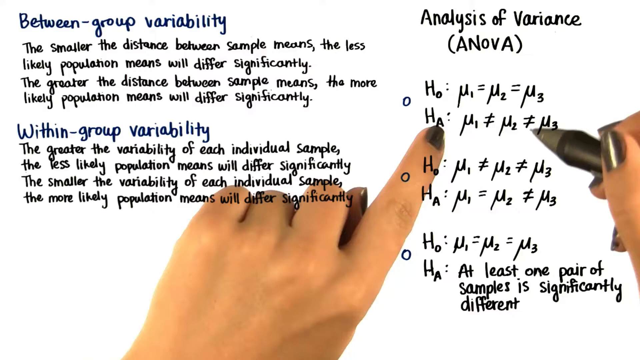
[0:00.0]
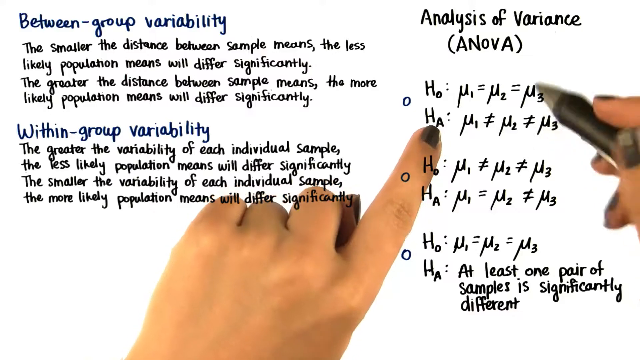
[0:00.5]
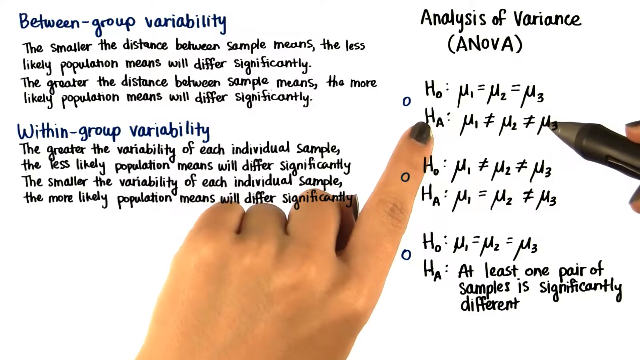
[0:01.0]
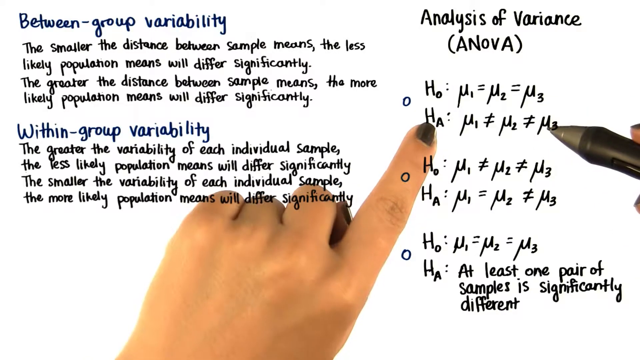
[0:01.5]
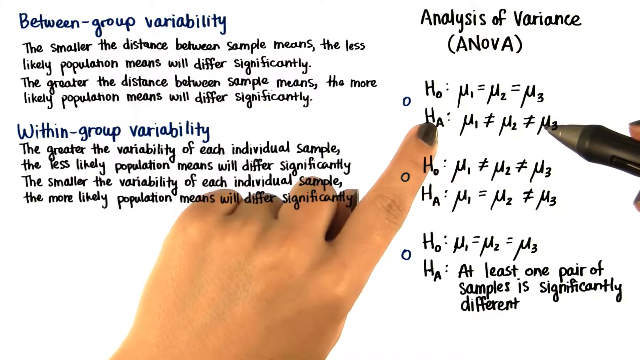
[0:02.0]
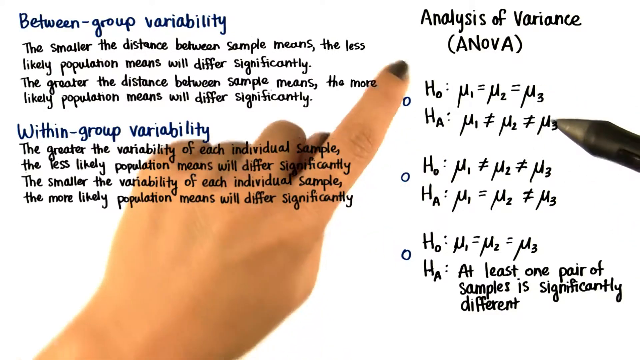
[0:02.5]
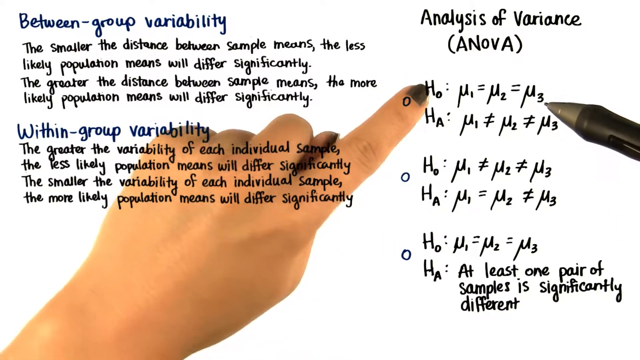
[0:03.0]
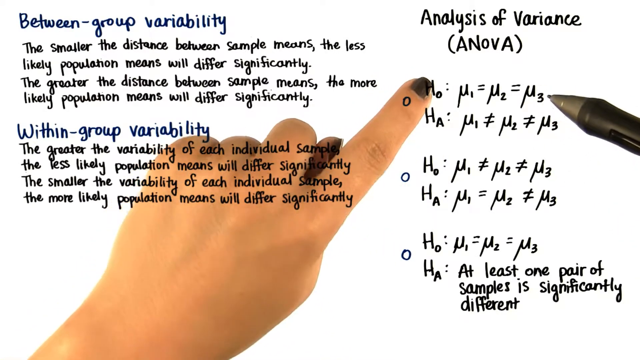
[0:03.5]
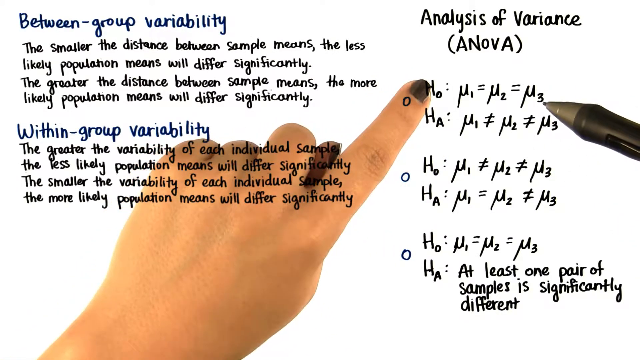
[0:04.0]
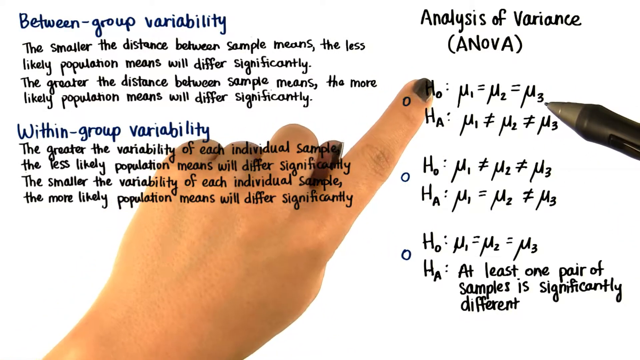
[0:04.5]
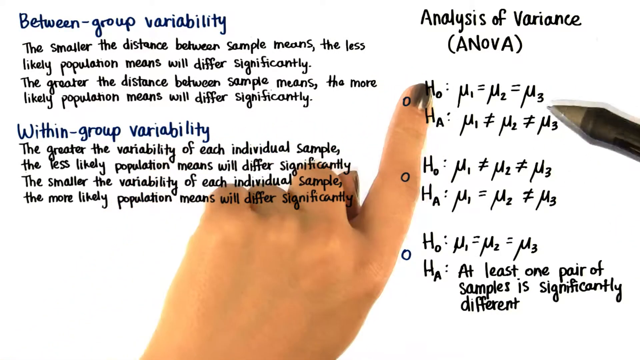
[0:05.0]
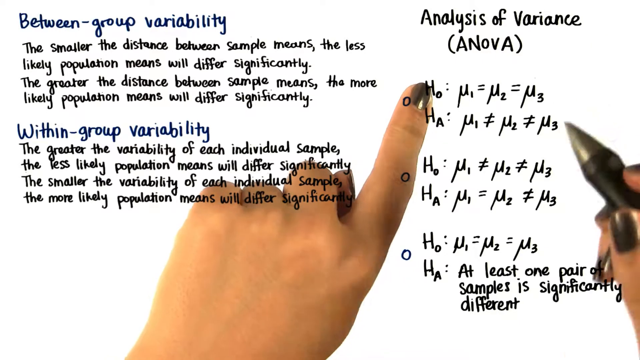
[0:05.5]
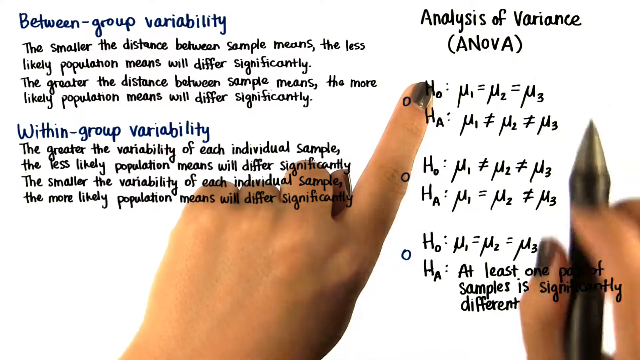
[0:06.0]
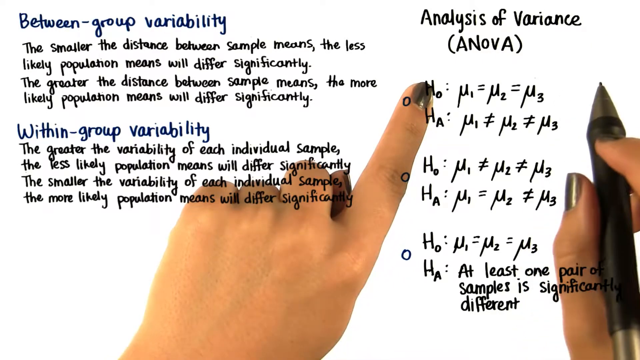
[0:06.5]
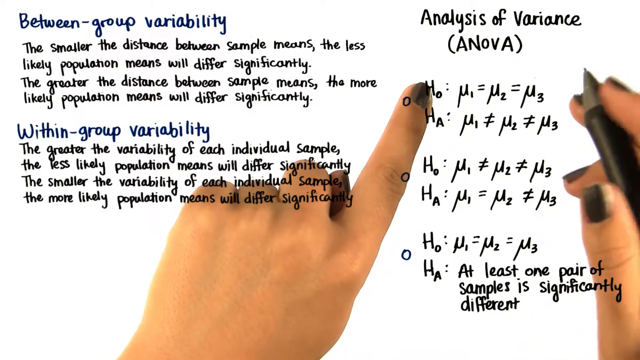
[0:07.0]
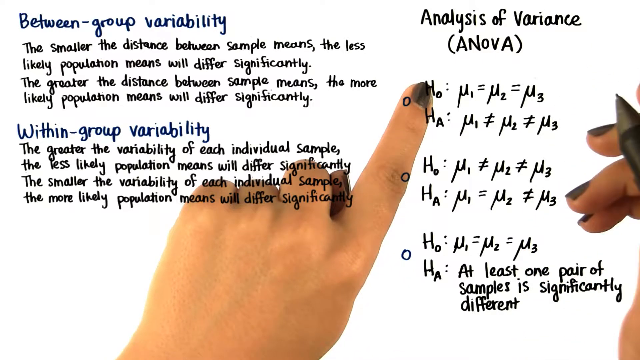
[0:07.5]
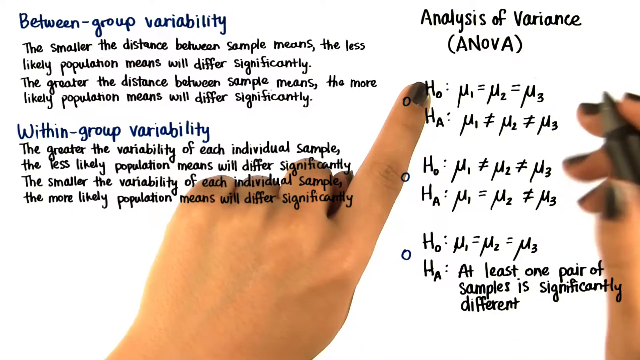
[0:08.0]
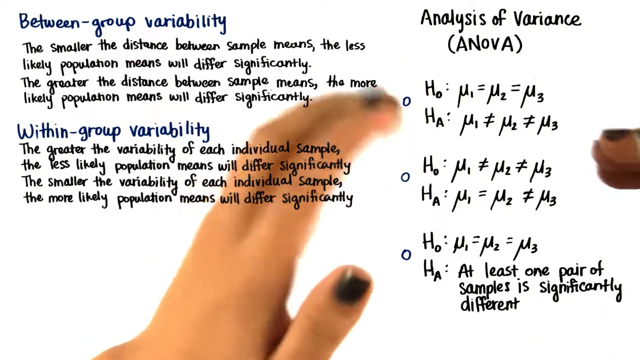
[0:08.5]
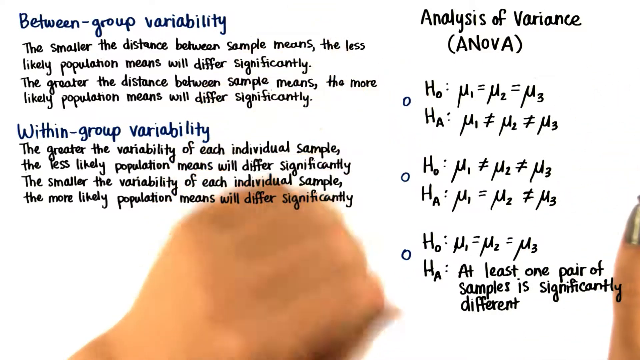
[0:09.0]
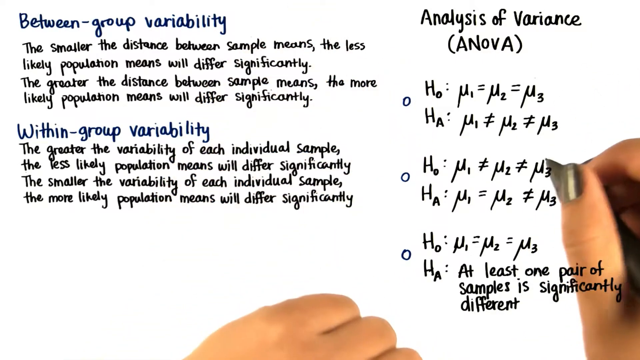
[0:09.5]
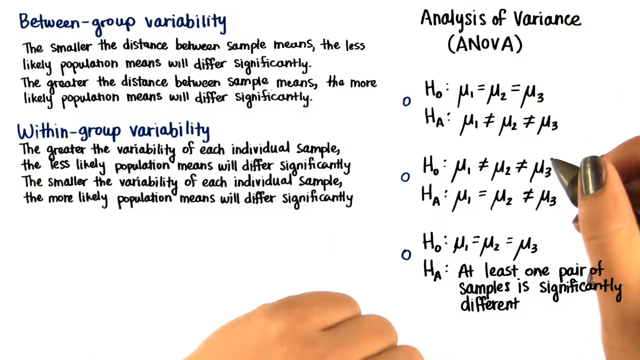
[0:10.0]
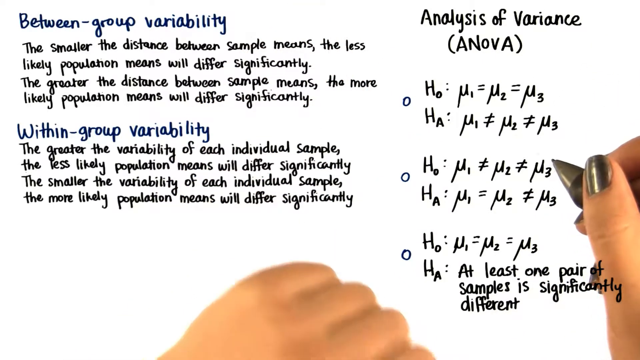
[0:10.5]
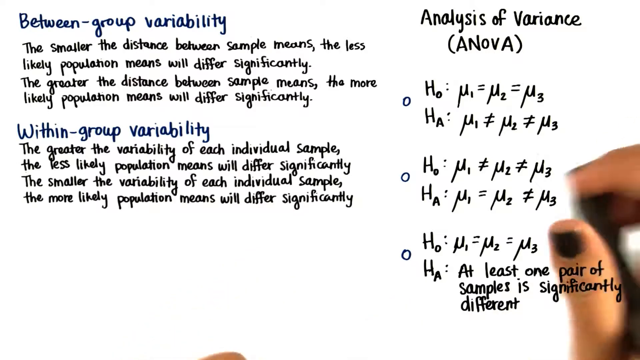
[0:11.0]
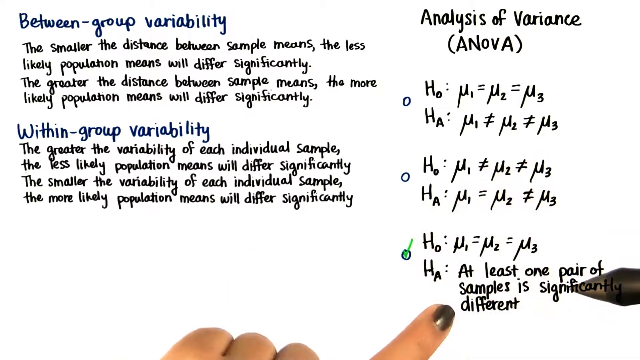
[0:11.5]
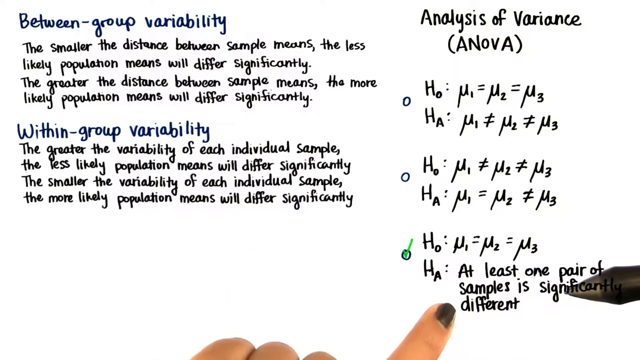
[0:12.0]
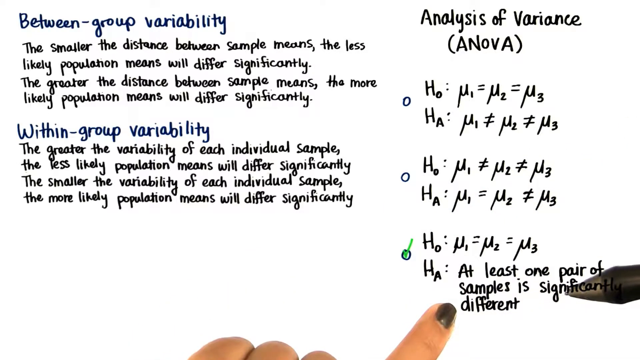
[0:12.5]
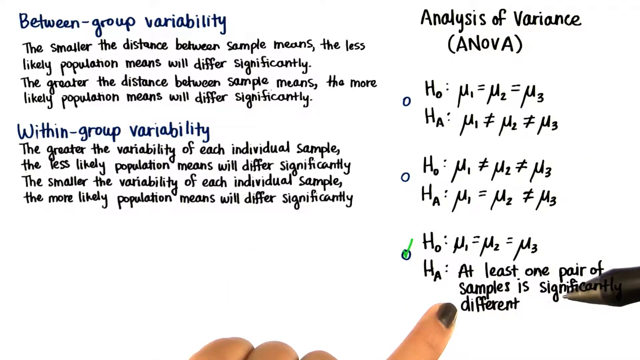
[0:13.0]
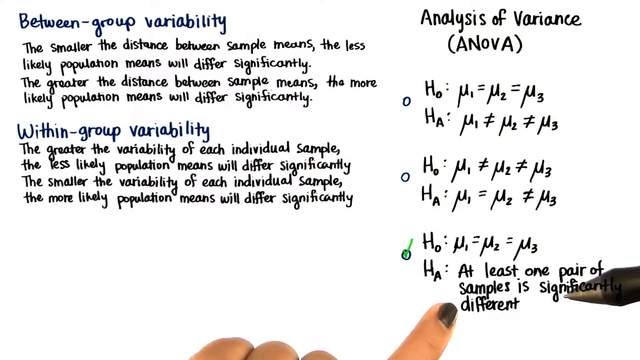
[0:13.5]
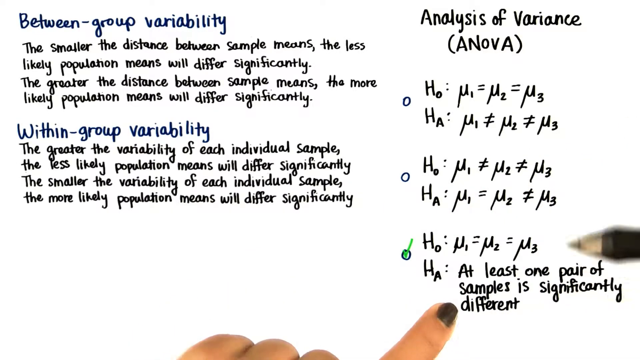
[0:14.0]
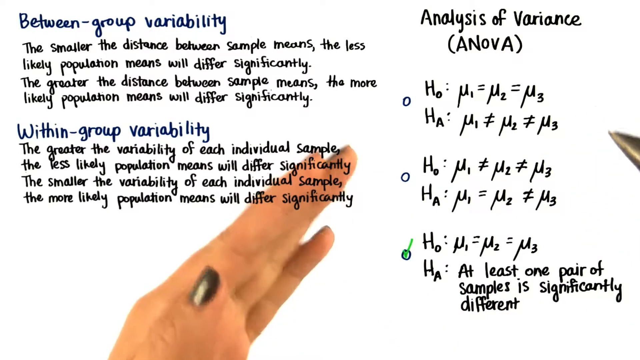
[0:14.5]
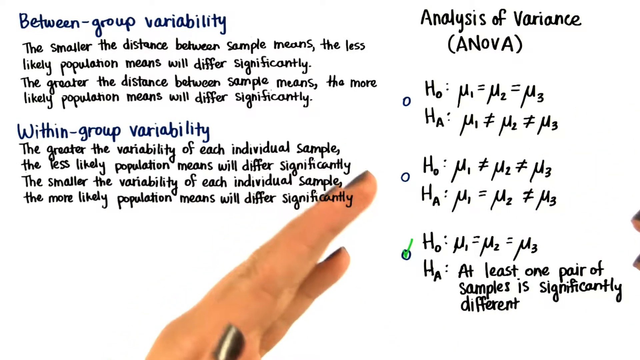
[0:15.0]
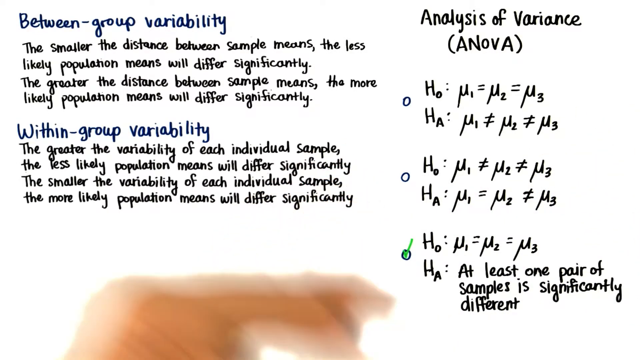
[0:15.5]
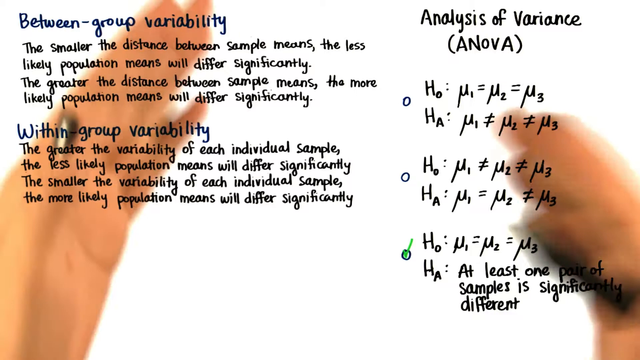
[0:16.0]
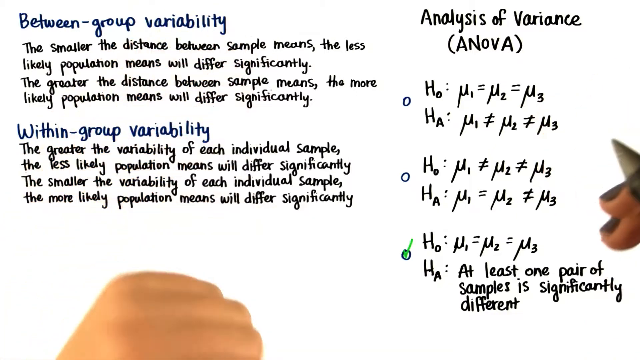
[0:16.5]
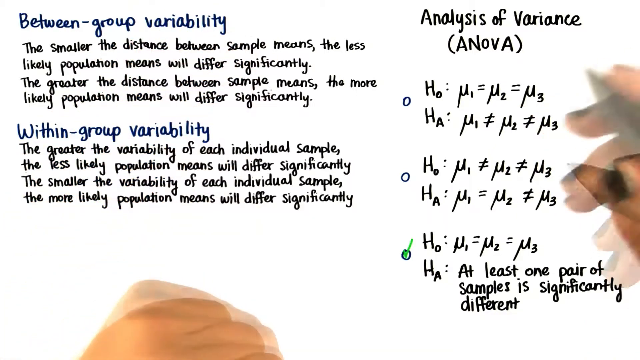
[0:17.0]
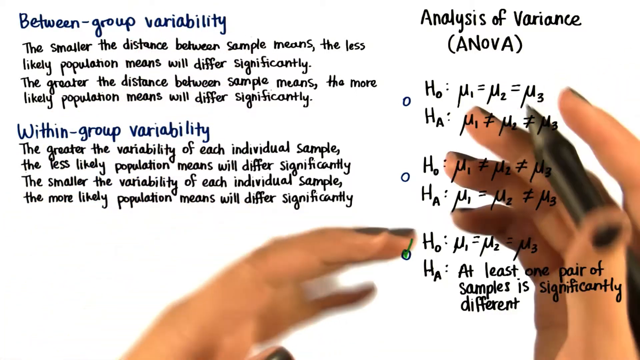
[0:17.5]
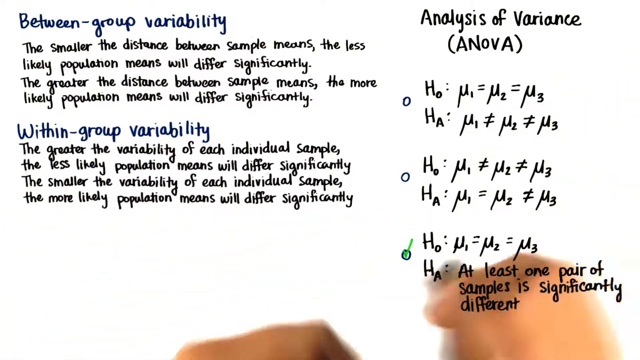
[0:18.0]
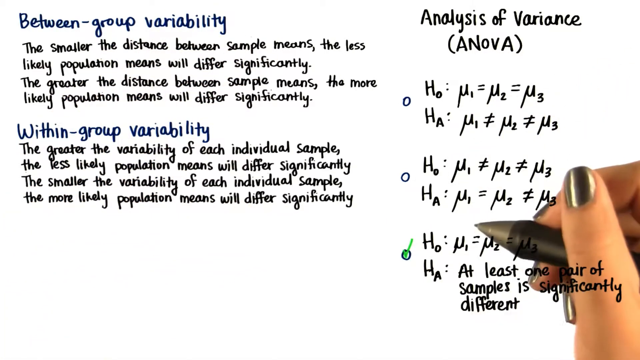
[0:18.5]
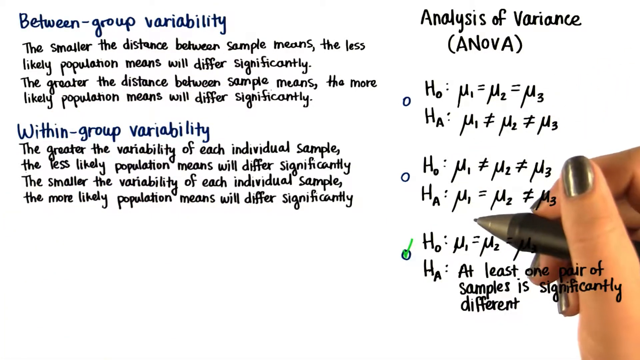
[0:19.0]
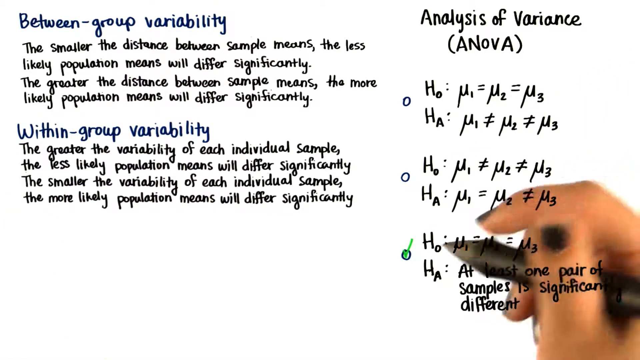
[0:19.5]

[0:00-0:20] The video opens on a white screen with a lot of text on it, with two hands pointing at part of the text. At the top left is the title "Between Group Variability" in dark blue text, with a short definition underneath in black text. Below that is another dark blue title, "Within Group Variability", with its definition underneath in black text. At the top right of the screen is "Analysis of Variance", with "A-N-O-V-A" in brackets below it, and beneath that are more points and information, including letters and other symbols. A hand points at the top symbols on the right side of the screen. There are three points with different information, each with a white circle beside it. The hand moves down to the bottom point and writes a green checkmark within that circle.